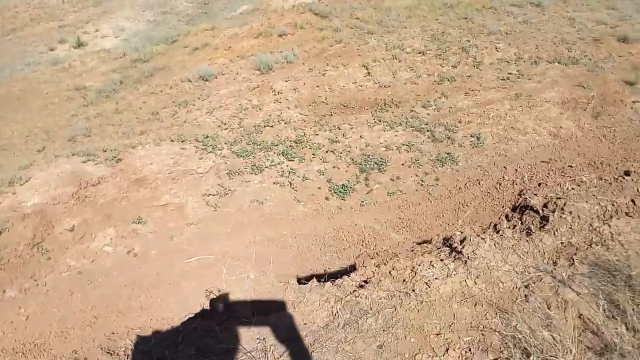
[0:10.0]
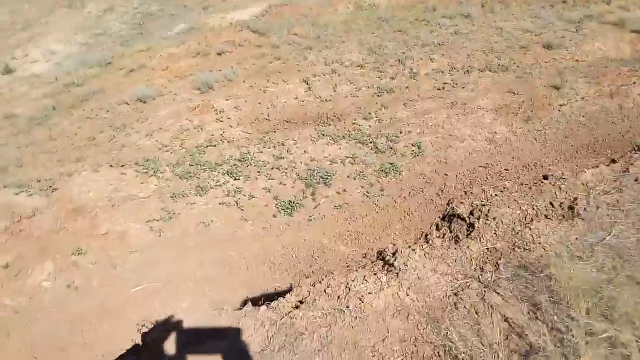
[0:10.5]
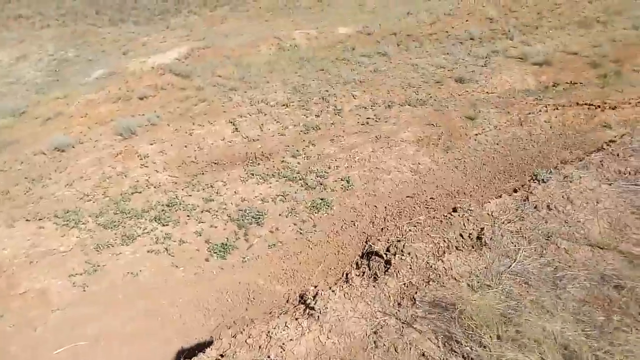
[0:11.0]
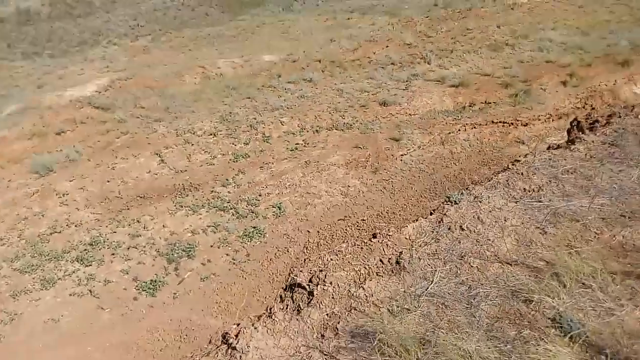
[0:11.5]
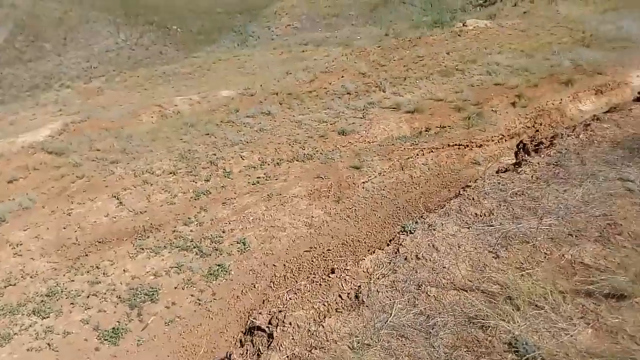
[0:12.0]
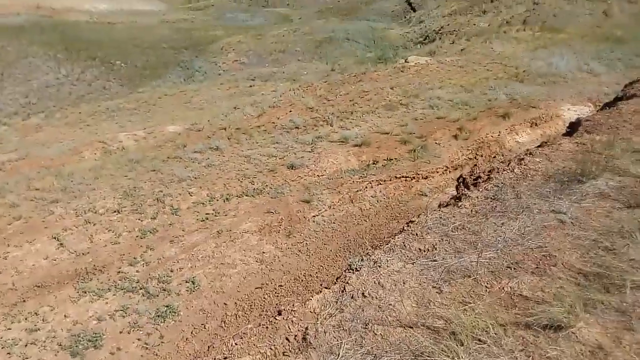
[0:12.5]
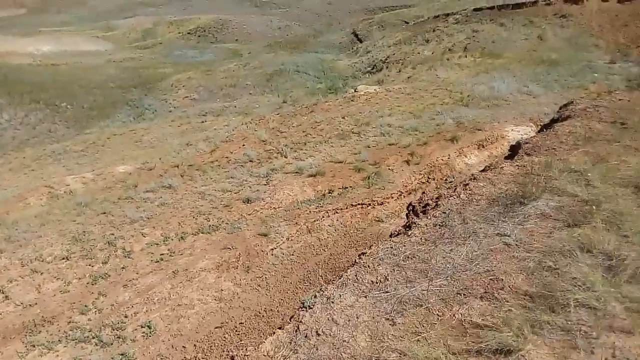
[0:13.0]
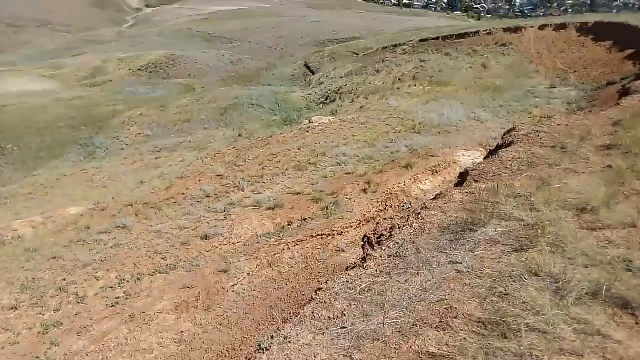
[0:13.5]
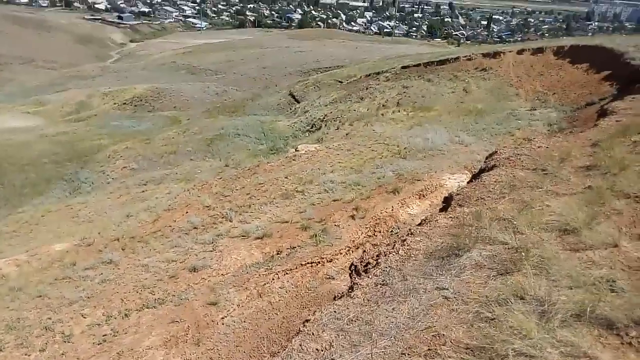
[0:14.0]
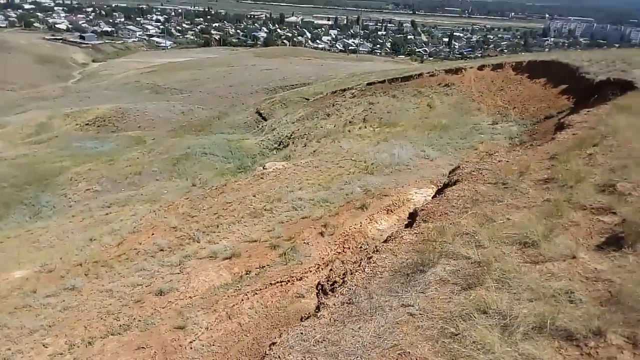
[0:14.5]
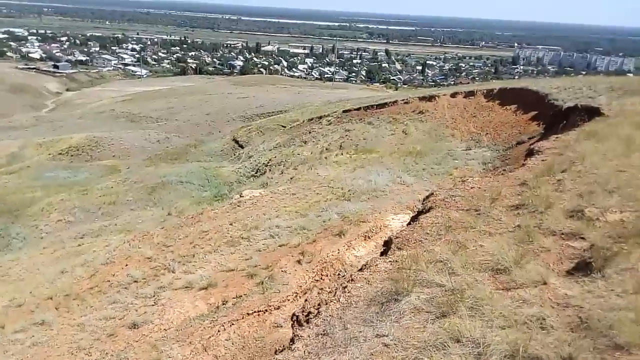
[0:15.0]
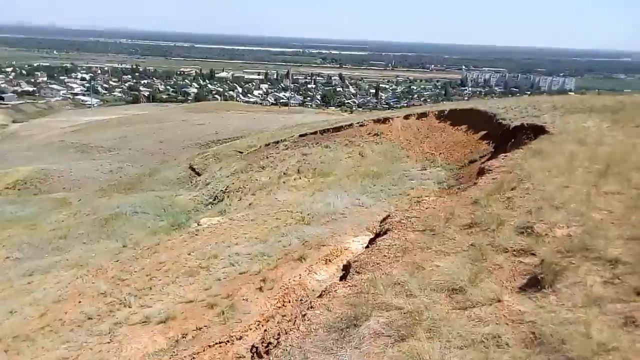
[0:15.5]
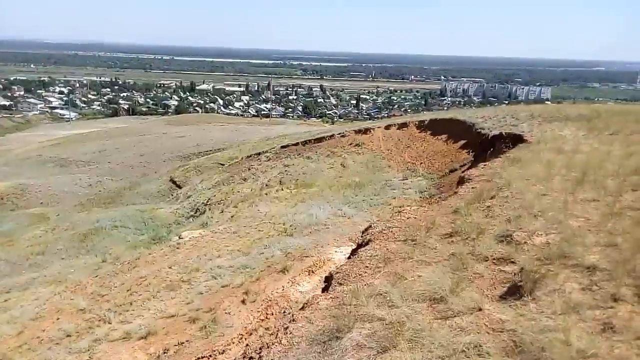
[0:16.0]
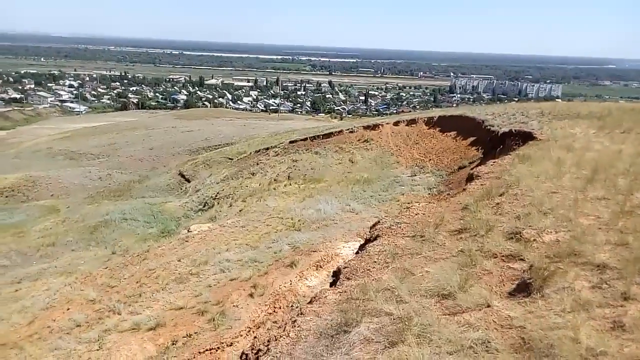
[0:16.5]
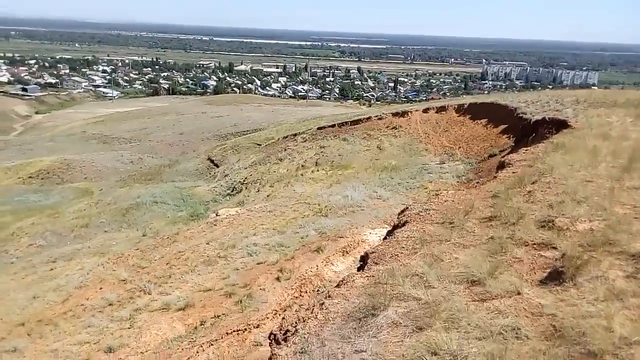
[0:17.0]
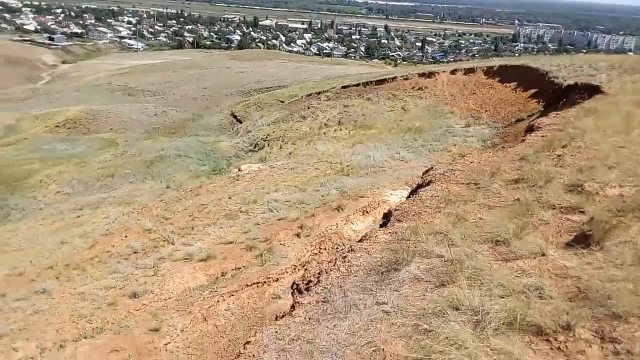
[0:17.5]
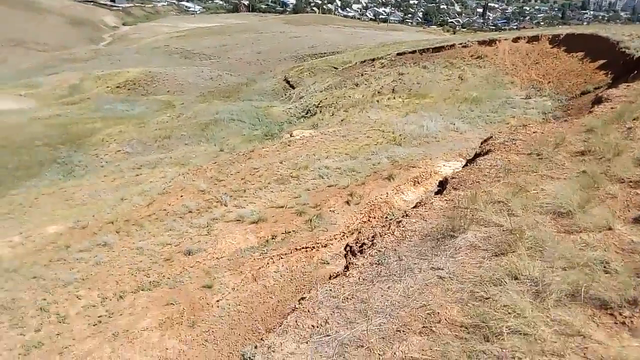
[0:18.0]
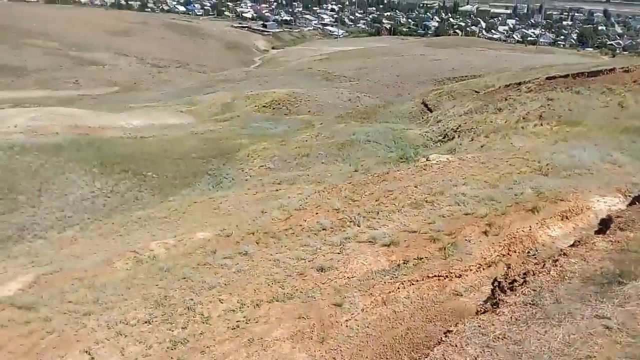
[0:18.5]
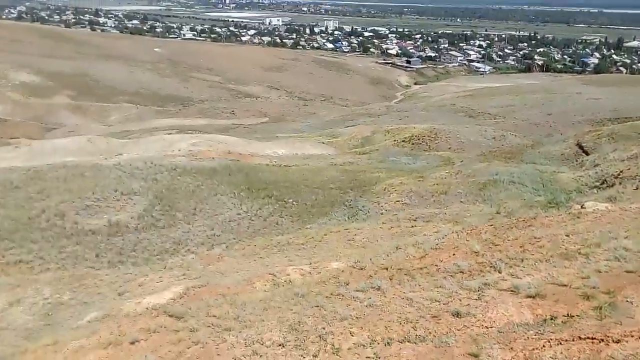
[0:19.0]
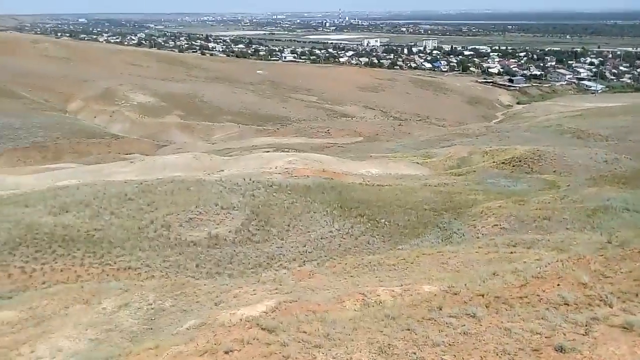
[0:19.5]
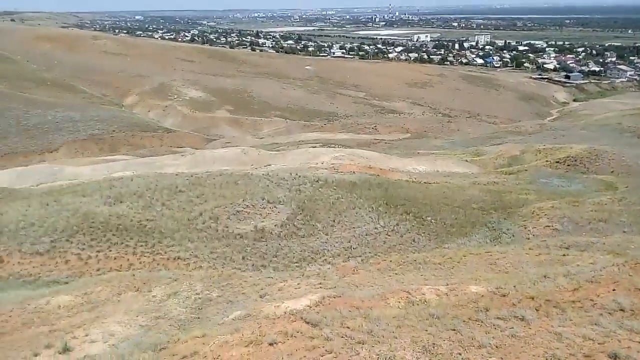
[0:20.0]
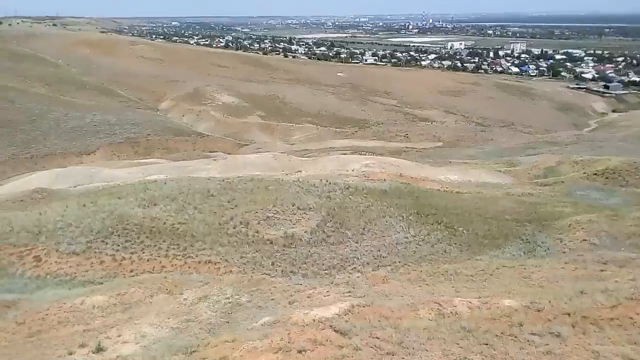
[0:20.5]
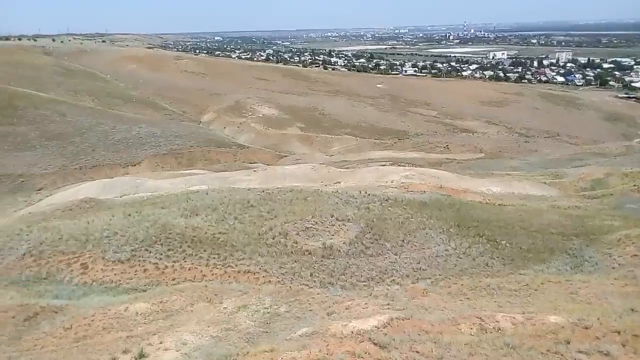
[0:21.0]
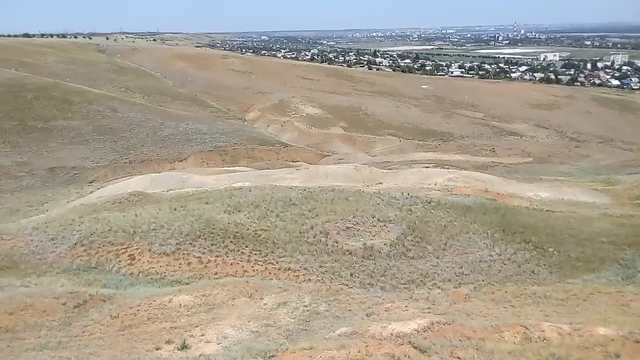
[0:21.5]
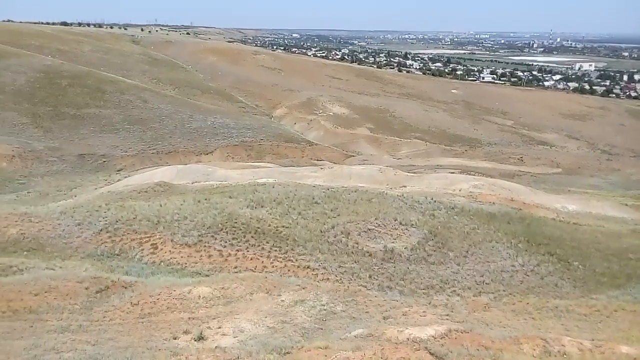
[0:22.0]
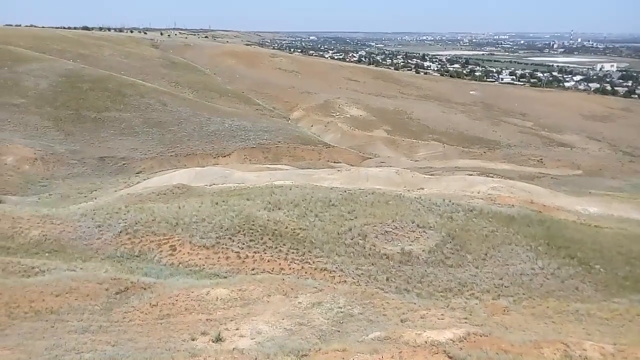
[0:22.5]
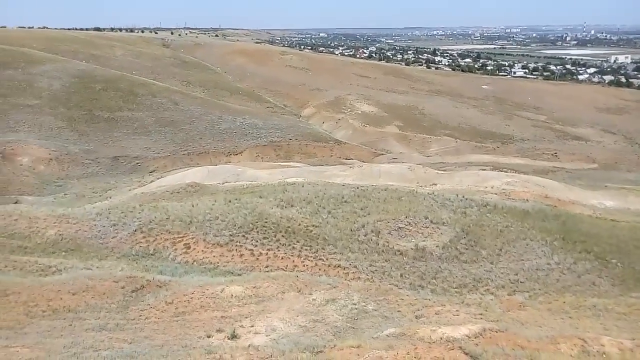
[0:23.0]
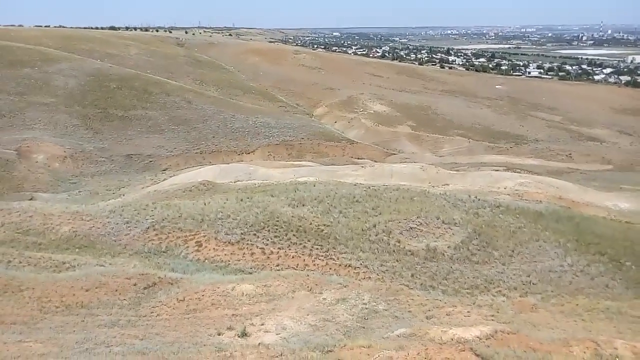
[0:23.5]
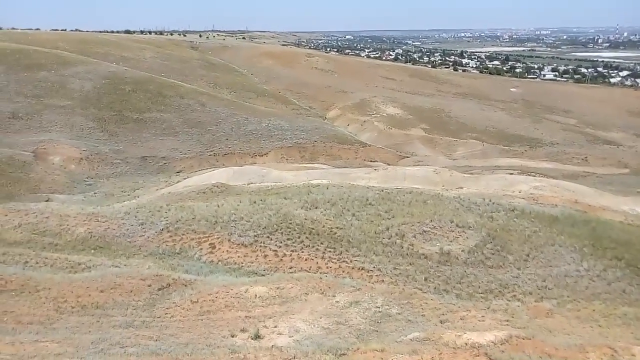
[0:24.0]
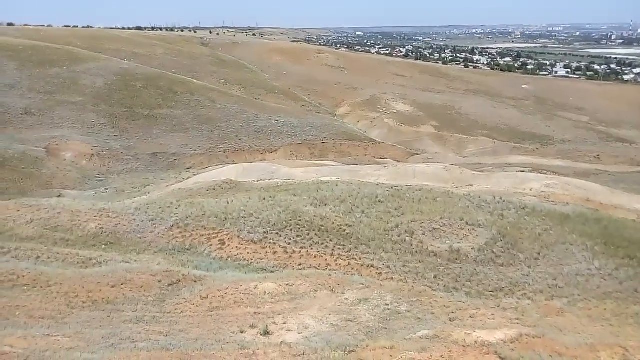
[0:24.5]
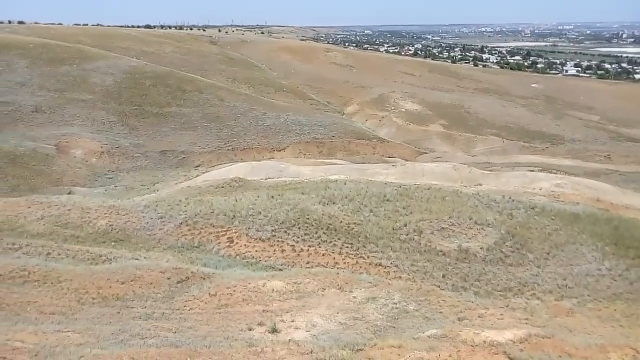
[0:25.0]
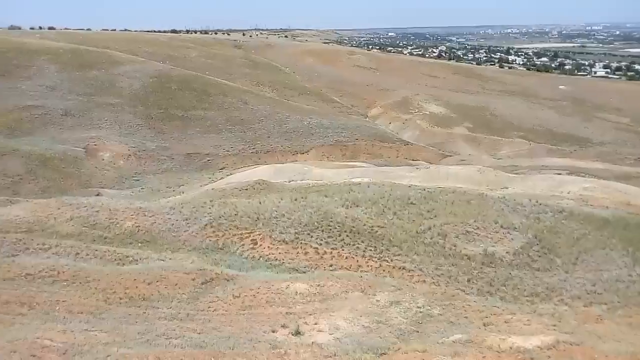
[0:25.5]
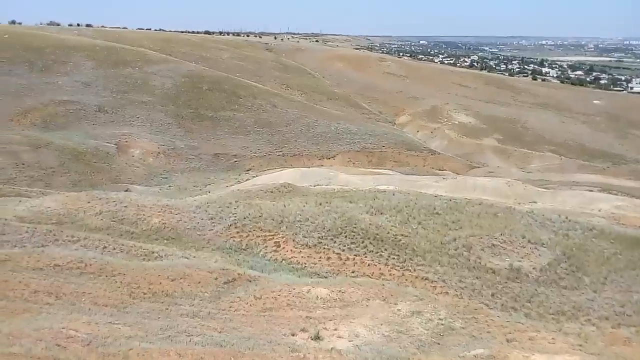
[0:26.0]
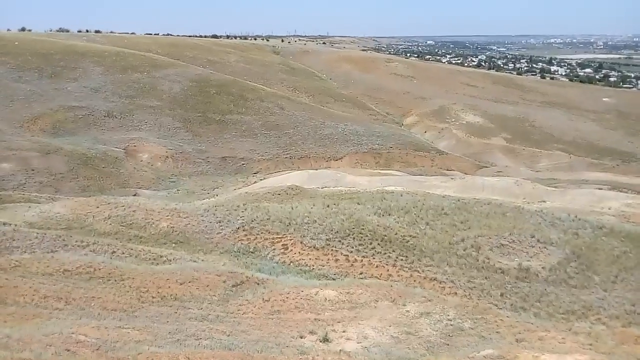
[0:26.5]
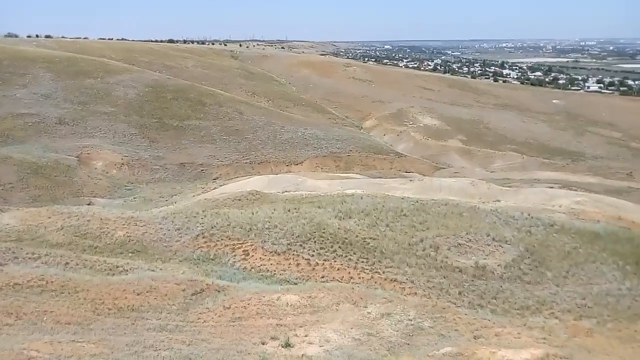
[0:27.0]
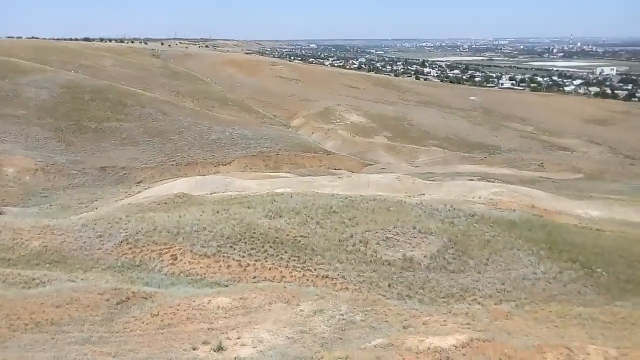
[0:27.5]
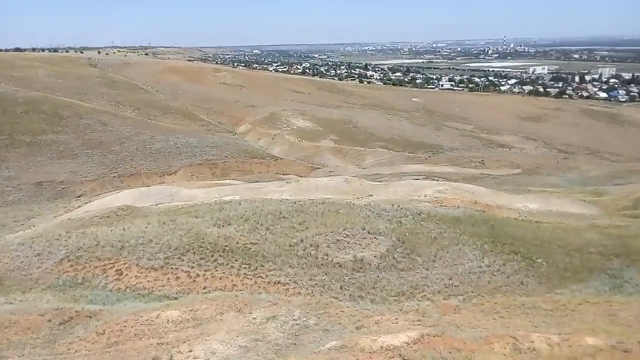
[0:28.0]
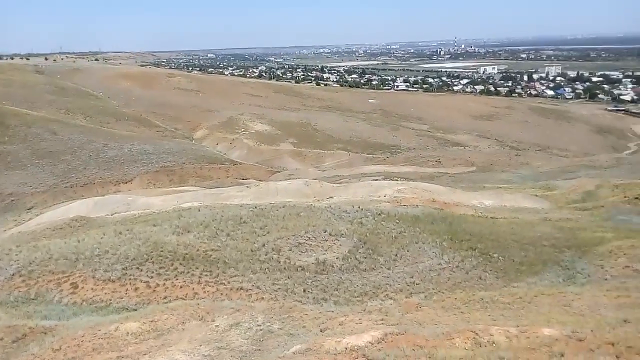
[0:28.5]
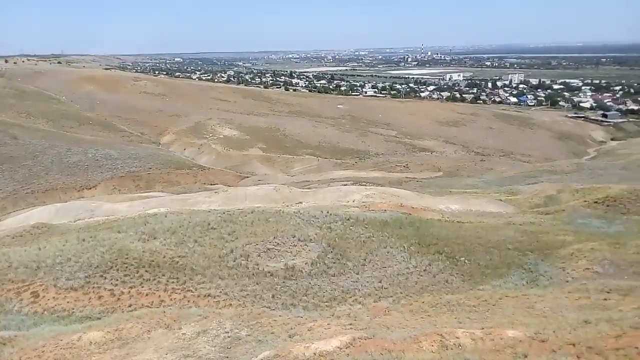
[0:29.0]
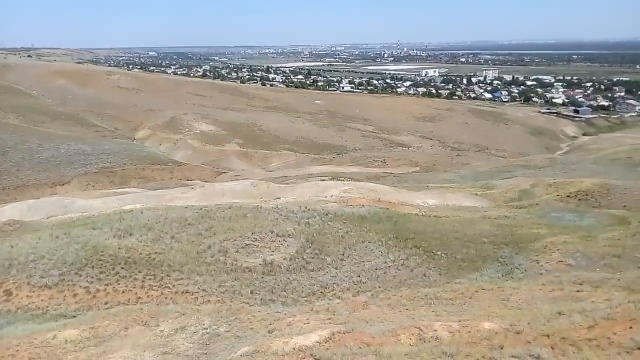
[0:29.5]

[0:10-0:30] It appears to be spring or fall. A well-inhabited area is now visible, with what look like houses, properties, businesses and cars in the background. The view seems to look out over possibly a golf course or golfing area. The grass is not vibrant green and looks like it is dying; a very large area of immature or dying grass appears to lie behind or adjacent to a neighborhood or city. The sky looks overcast and cloudy, and it is broad daylight. No people are visible other than the shadow of the one person, and no animals appear.